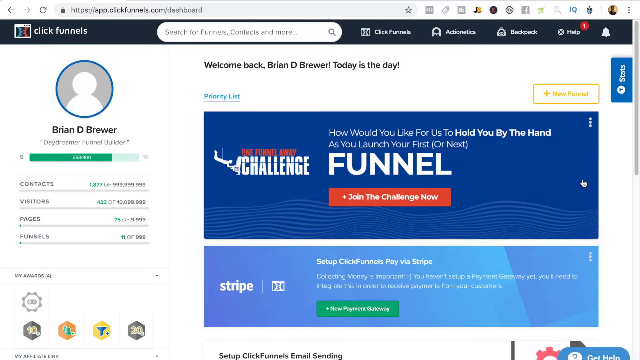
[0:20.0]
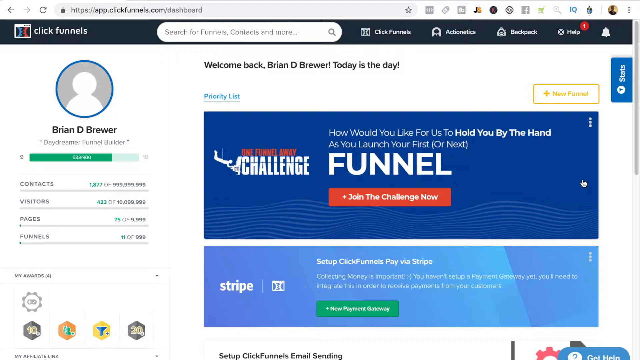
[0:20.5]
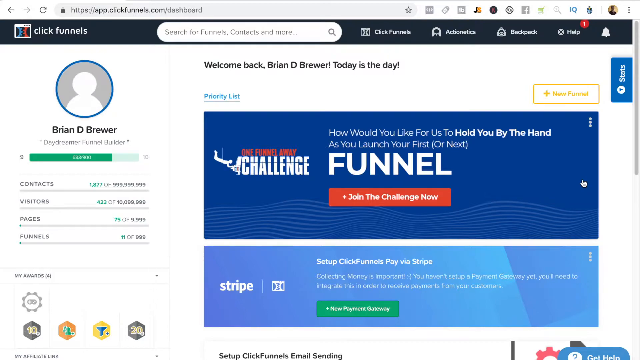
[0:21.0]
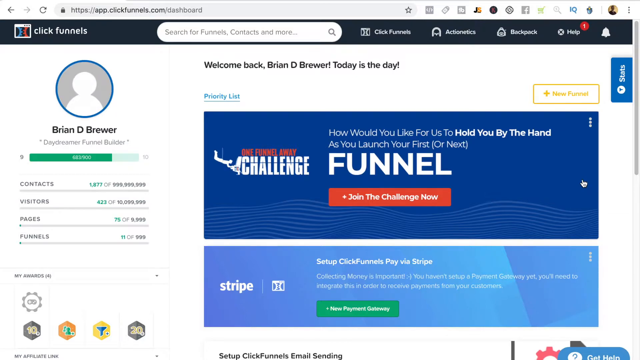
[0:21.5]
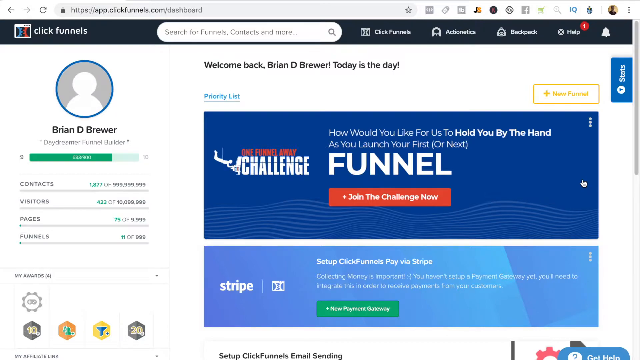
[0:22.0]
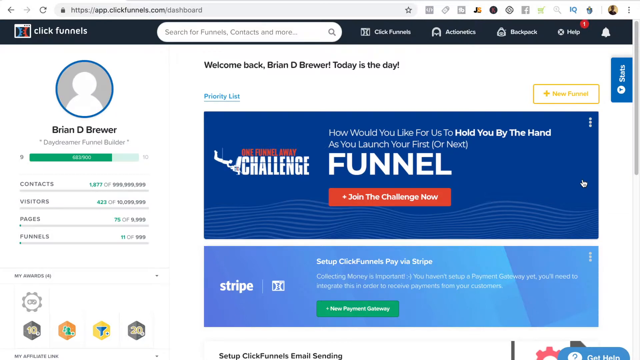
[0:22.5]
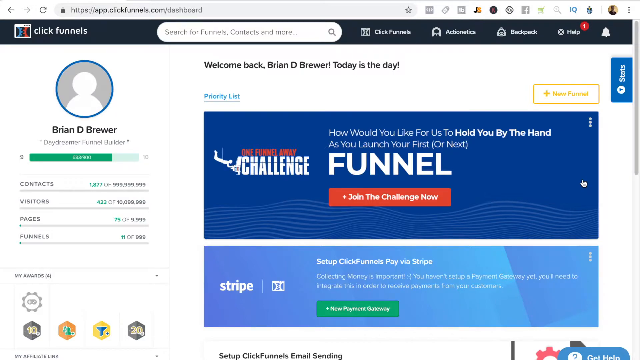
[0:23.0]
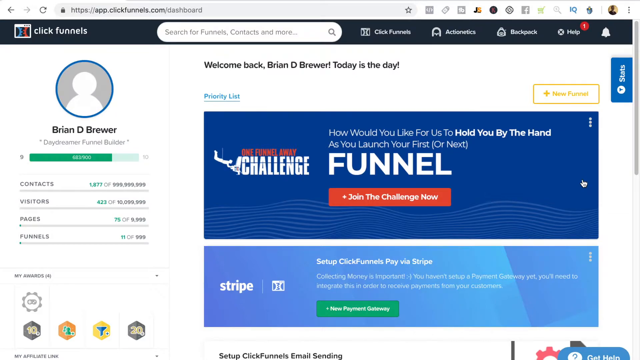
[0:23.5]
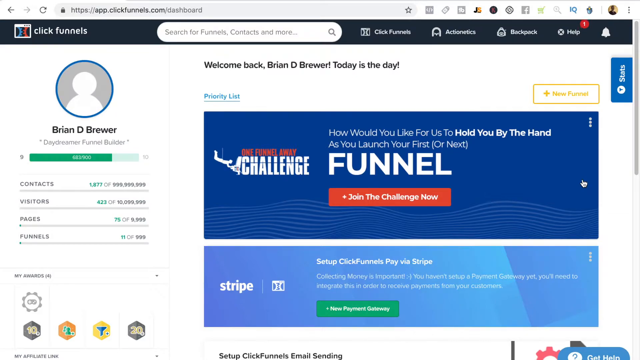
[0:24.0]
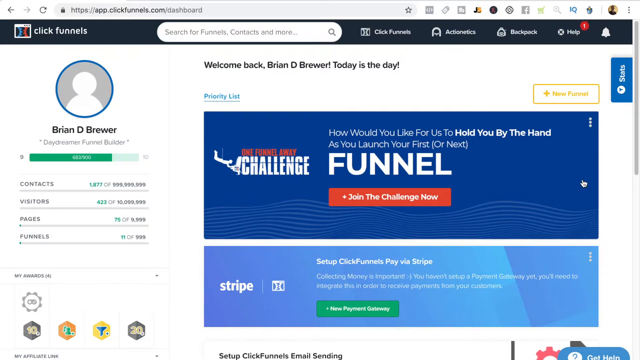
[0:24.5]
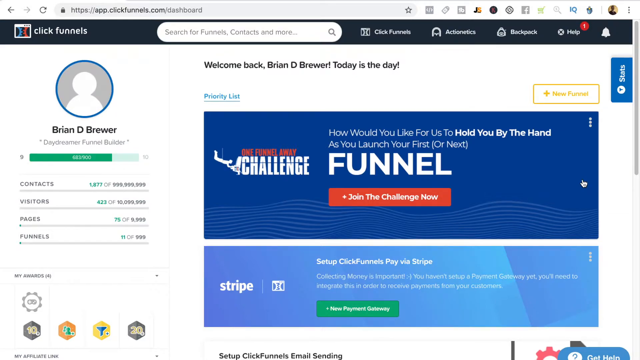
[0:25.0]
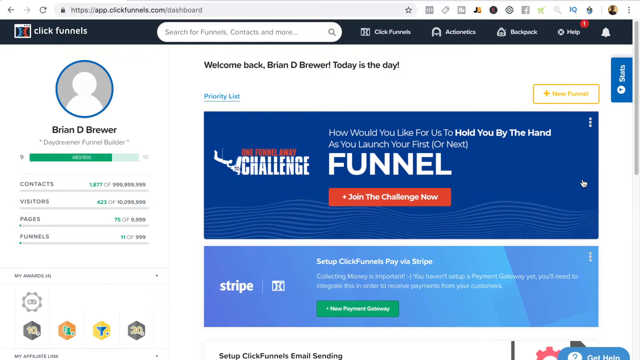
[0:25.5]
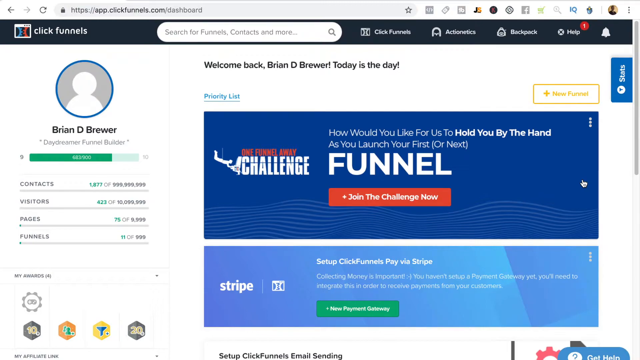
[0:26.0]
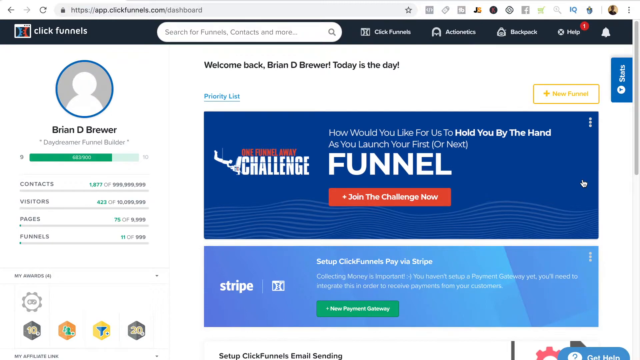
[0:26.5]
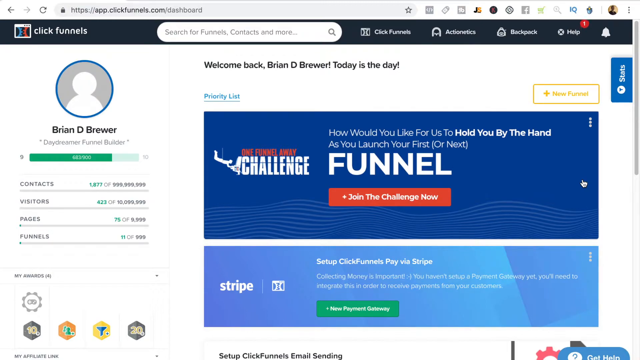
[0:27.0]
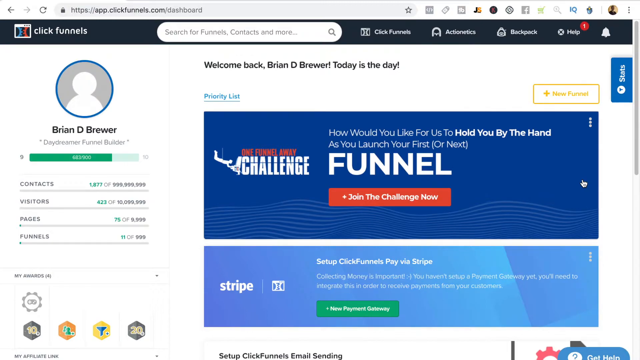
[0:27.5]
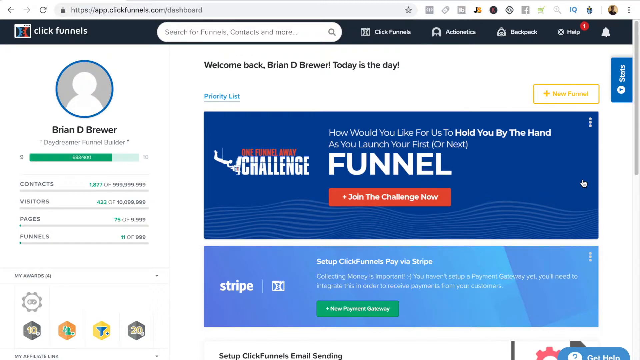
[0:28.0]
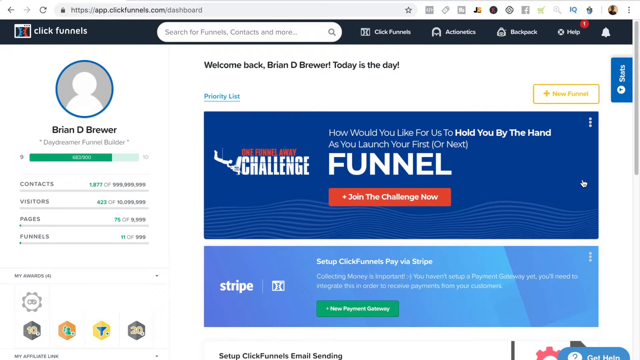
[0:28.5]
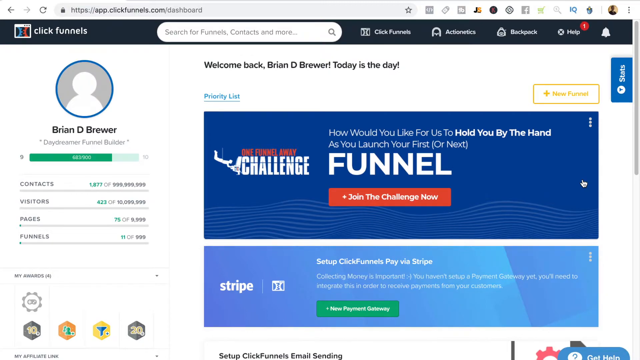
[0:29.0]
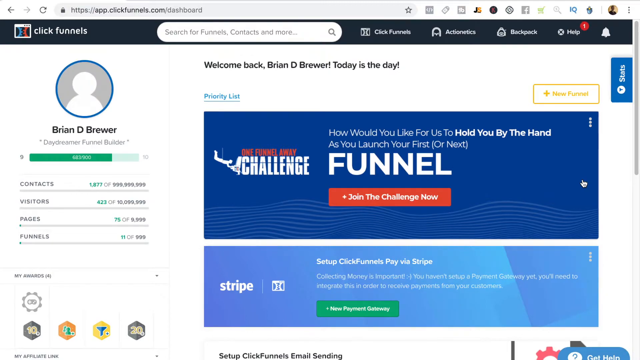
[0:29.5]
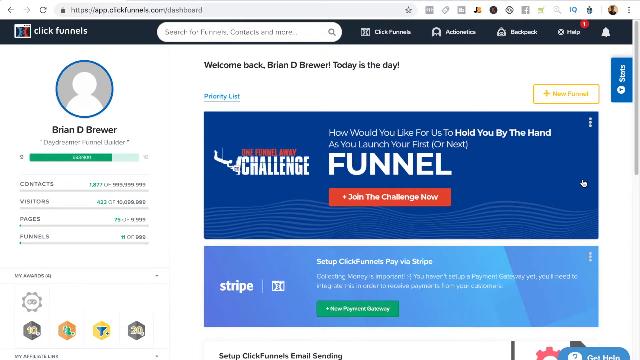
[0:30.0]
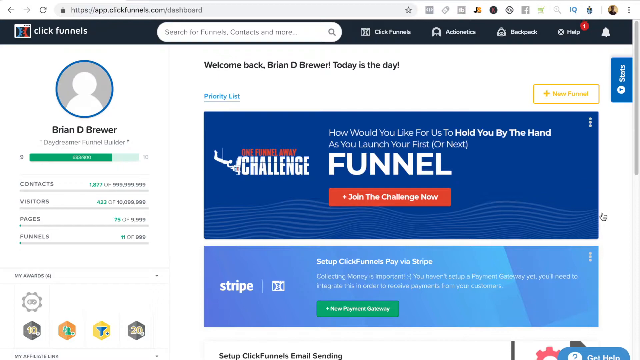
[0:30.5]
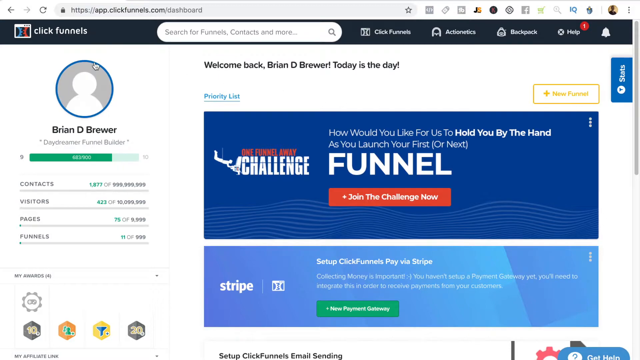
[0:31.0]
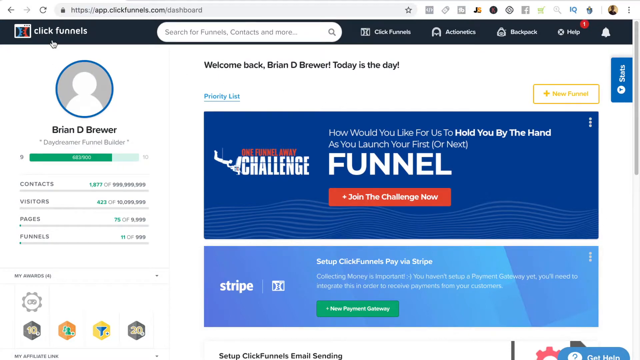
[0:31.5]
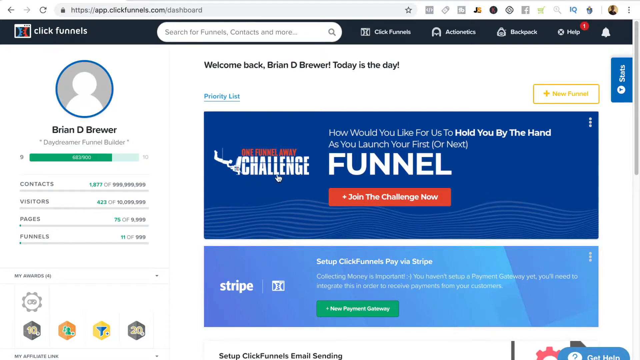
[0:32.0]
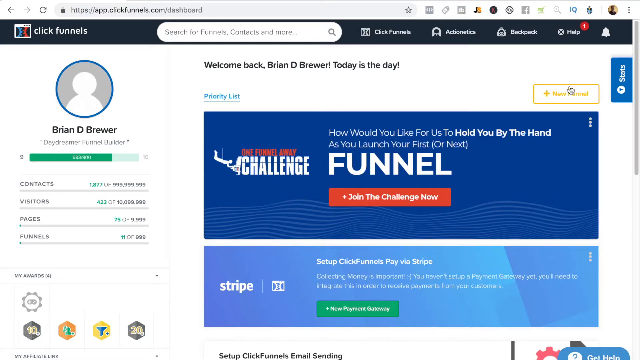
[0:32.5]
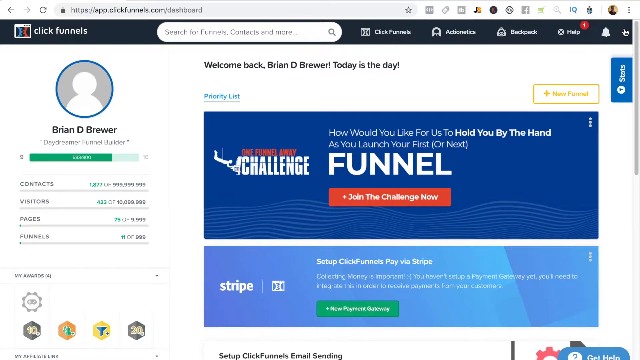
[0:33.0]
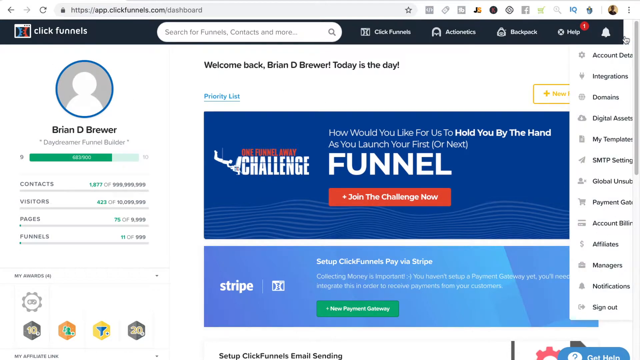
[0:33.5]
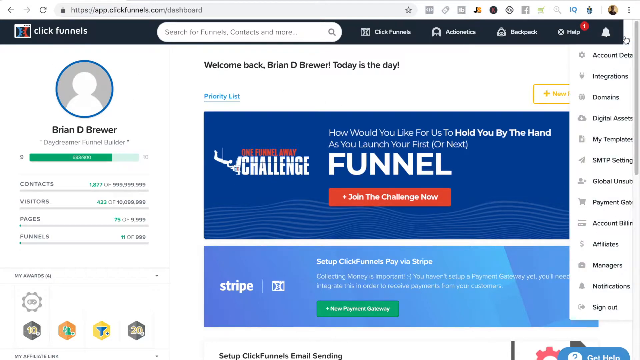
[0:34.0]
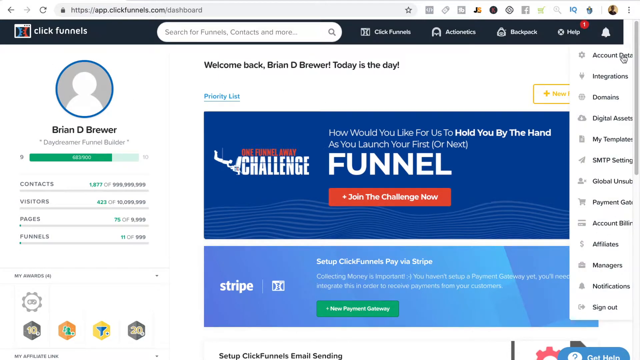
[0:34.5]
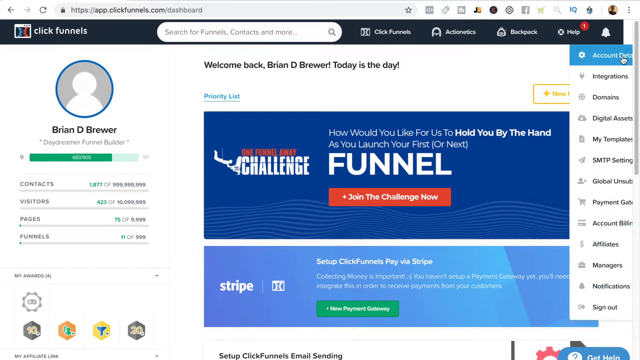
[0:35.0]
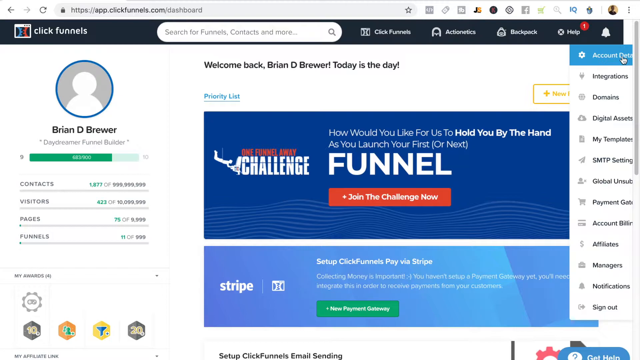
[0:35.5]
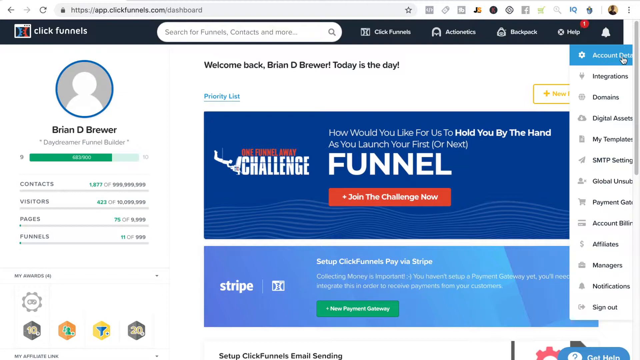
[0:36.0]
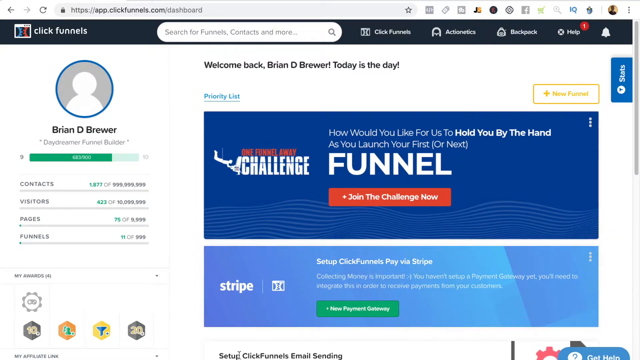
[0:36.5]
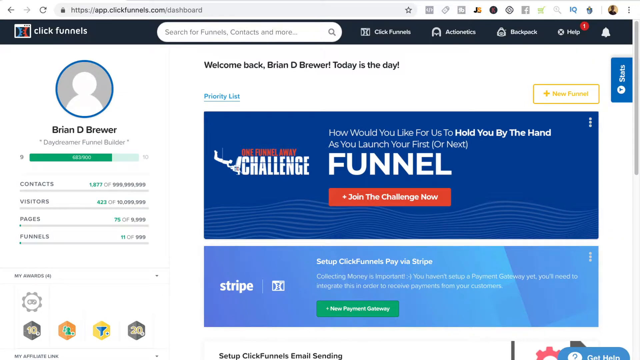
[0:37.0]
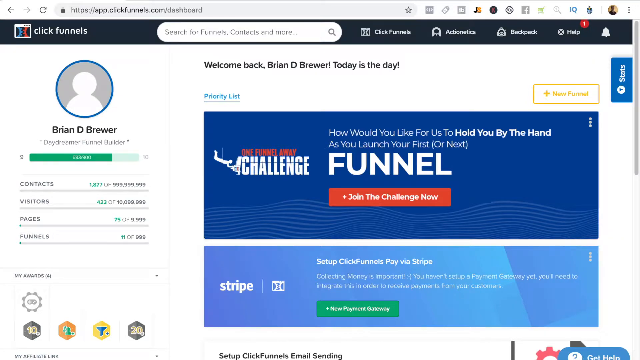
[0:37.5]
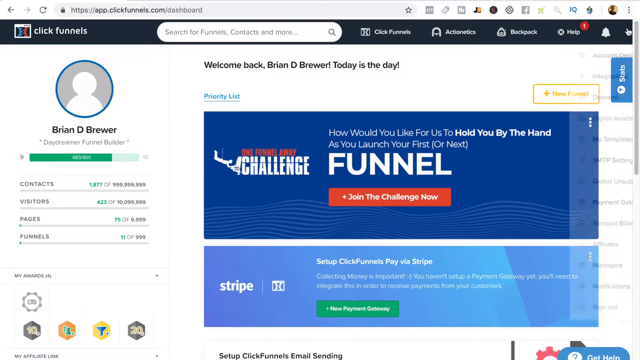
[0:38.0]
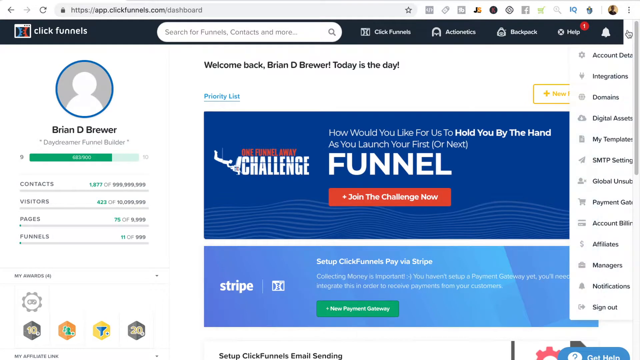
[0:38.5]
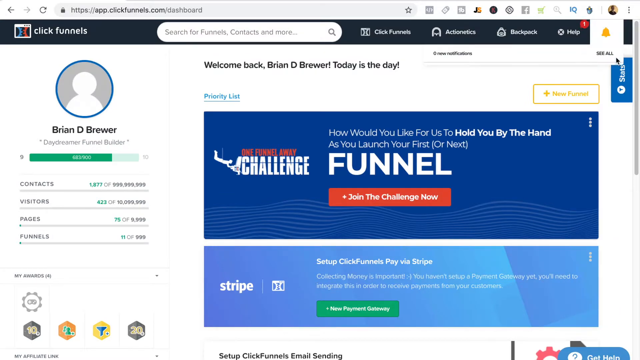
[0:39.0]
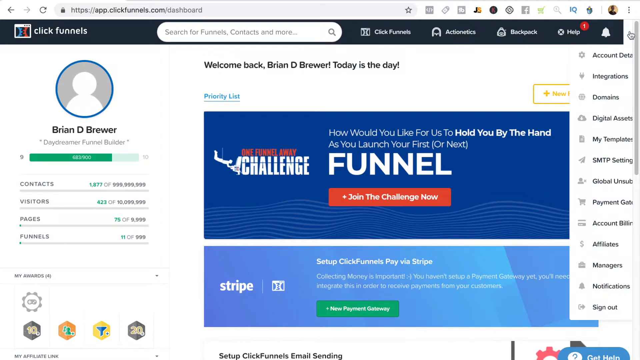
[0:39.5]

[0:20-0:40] Brian D. Brewer's ClickFunnels dashboard page stays on screen and for about 10 to 15 seconds nothing happens. The cursor, which becomes a hand over clickable items and an arrow in non-clickable areas, moves from the big dark blue box in the middle of the page up to the ClickFunnels icon in the top left-hand corner, then goes back over and hovers over the notification bell, which turns from white to yellow. Hovering over it opens a menu reading "Account Data," "Integrations," "Domains," "Digital Assets," "My Templates," "SMTP Settings," "Global Unsub," "Payment Gateway," "Account Billing," "Affiliates," "Managers," "Notifications," and "Sign Out," with individual gray icons to the right of the words matching each task. The cursor moves down to the Account Details item, clicks out of the menu, and hovers over the notification bell again, and another menu pops up reading "Zero New Notifications" on the left and "See All" on the right. The mouse clicks on nothing except back onto the main dashboard page, which does not change; the menu, the web address, and the awards stay the same.